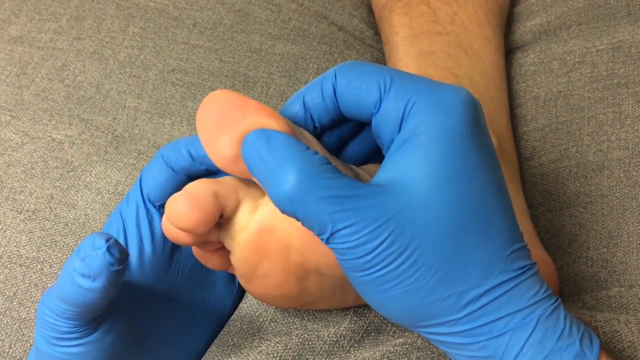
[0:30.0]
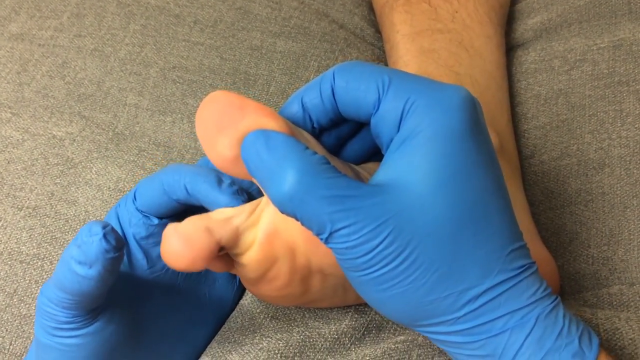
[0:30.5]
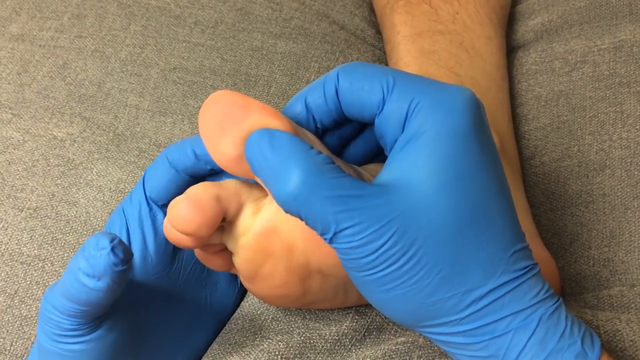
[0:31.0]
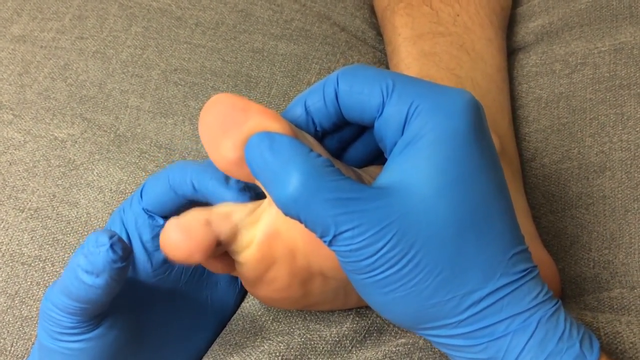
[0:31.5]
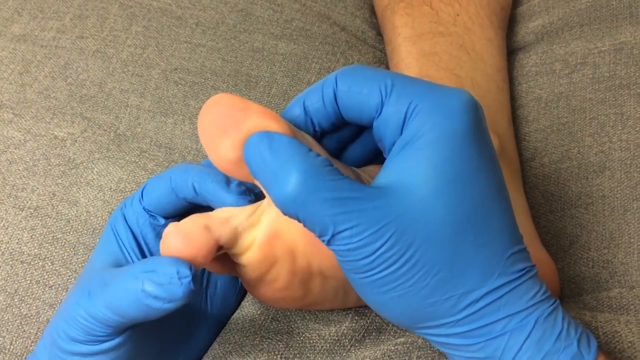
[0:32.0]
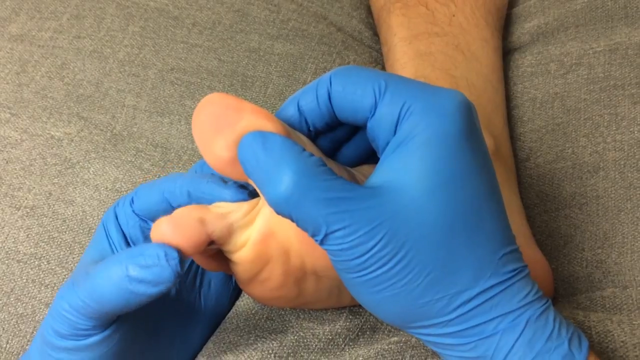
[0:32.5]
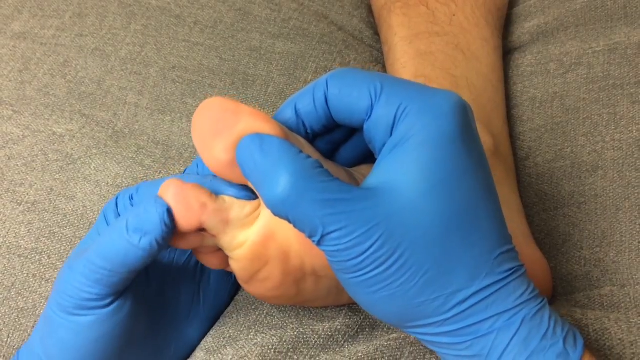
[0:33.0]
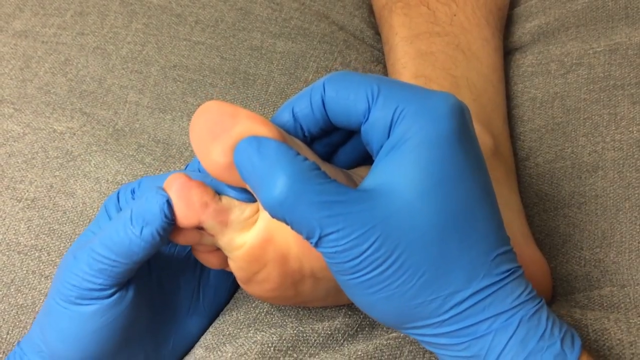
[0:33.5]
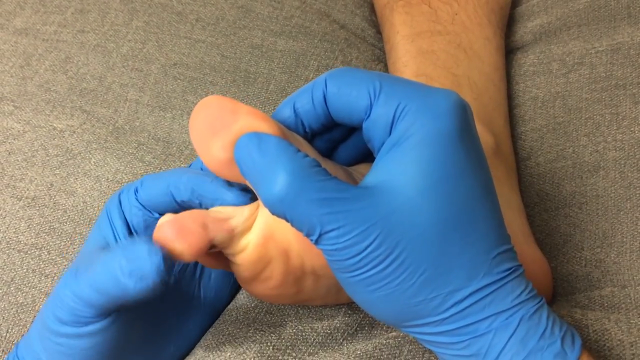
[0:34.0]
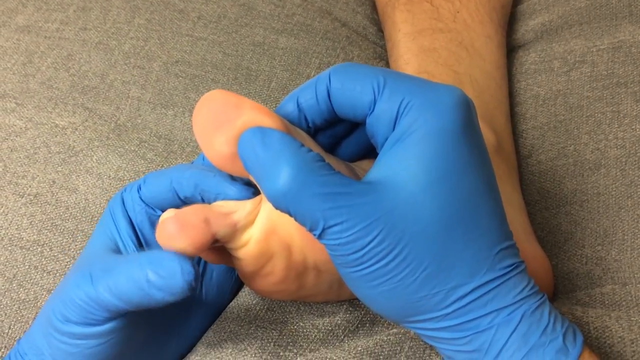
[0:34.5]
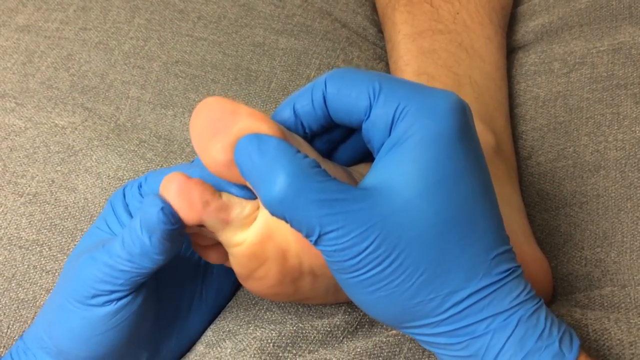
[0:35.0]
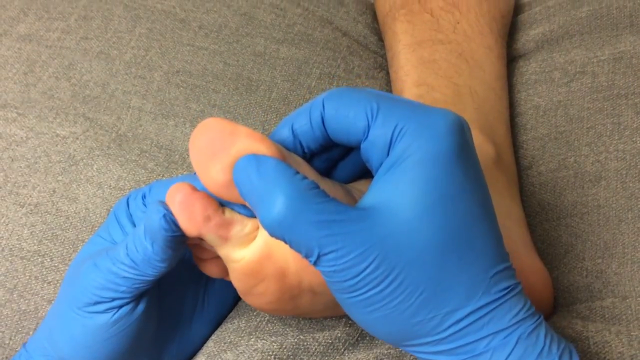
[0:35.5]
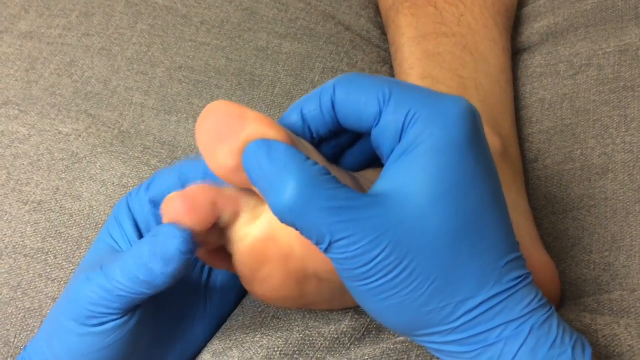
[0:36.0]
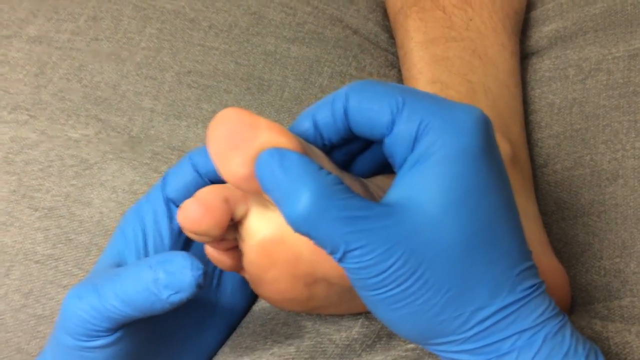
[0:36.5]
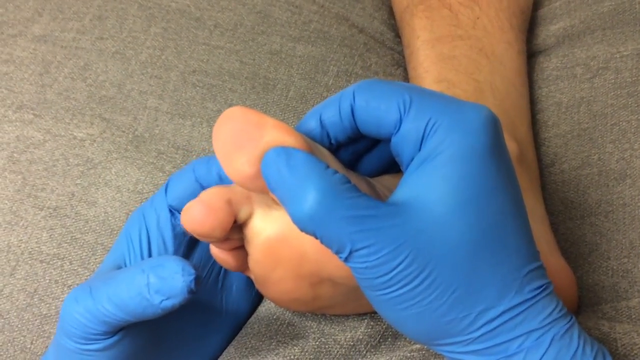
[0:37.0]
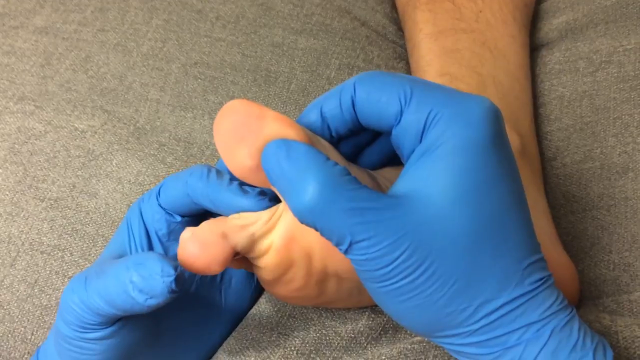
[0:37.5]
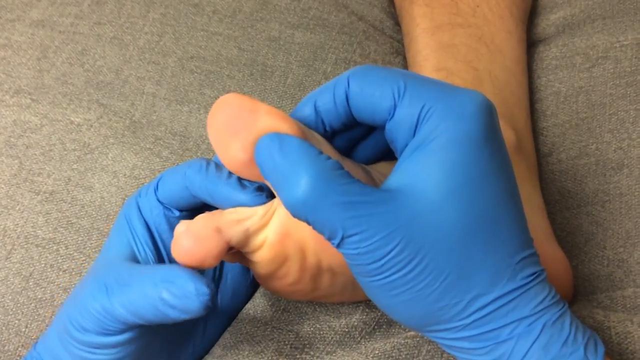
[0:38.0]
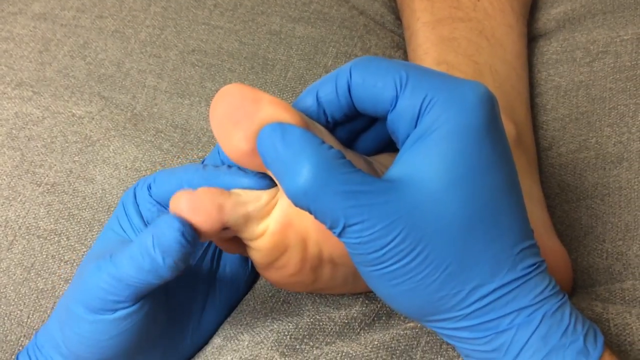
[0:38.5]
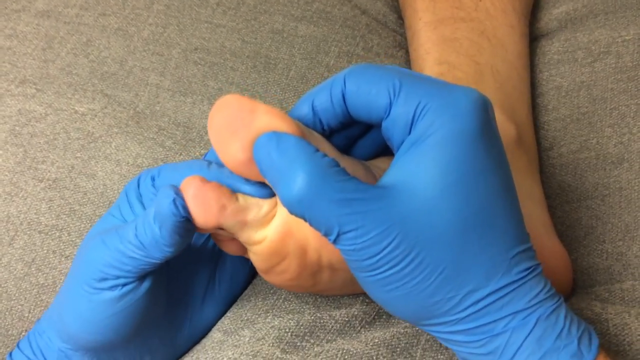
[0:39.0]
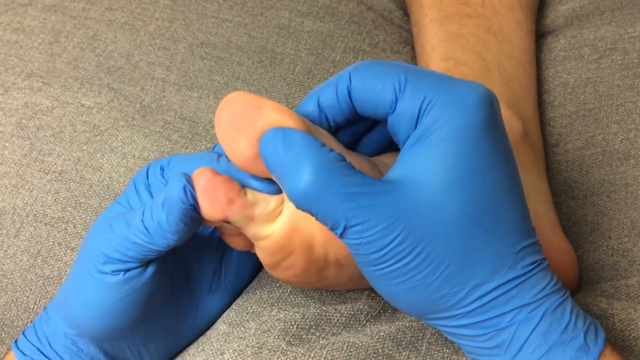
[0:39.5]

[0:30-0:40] The doctor holds the big toe with the right hand while the doctor's left pointer finger and thumb push the patient's second toe back and forth. The foot appears to be resting on a pillow or part of a couch that is grayish in color. Only the doctor's hands, in blue vinyl gloves, are visible, working the foot back and forth. The patient is visible from just below the calf, where the frame cuts off, and then there is an underside view of the toe.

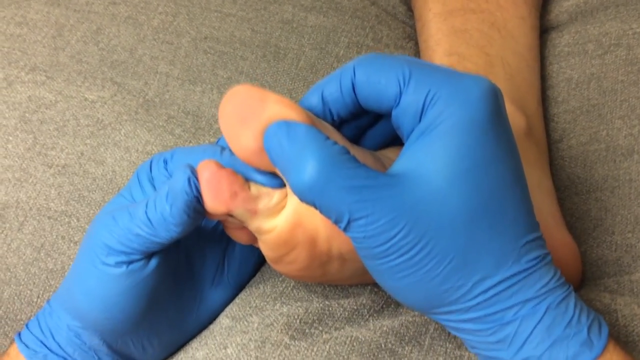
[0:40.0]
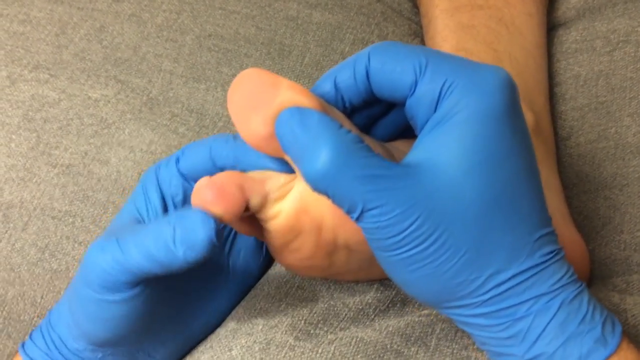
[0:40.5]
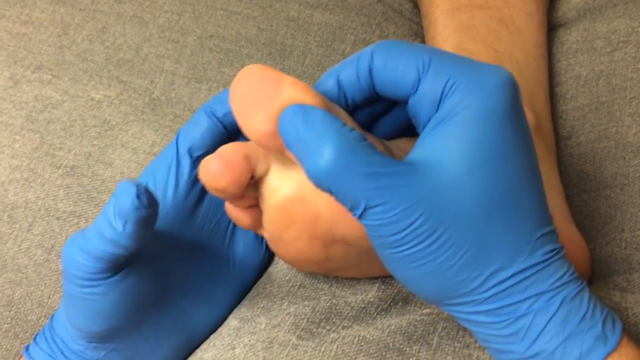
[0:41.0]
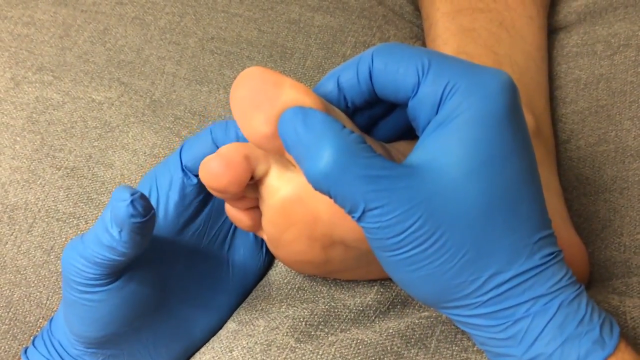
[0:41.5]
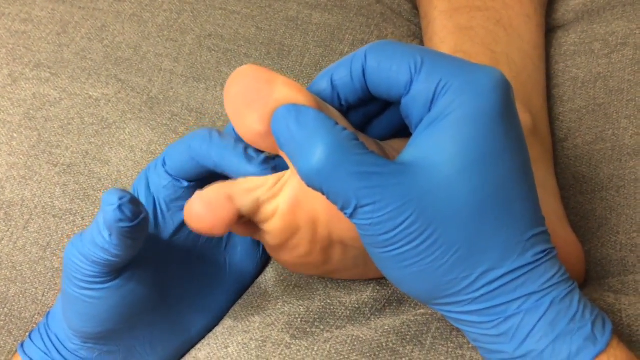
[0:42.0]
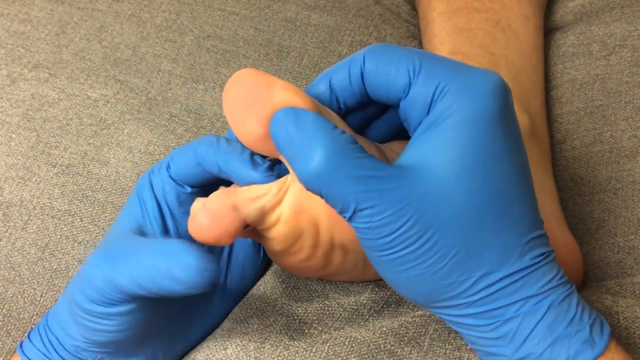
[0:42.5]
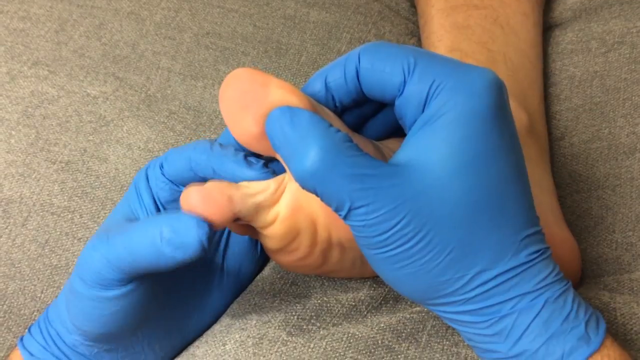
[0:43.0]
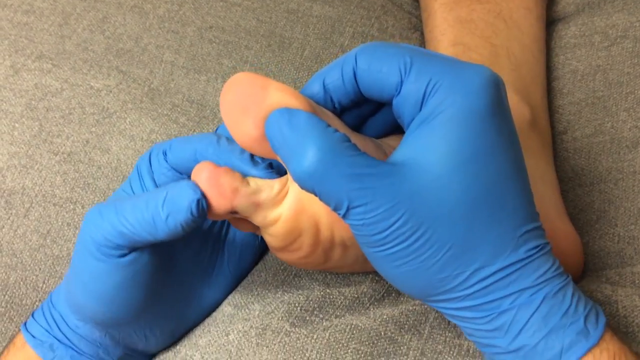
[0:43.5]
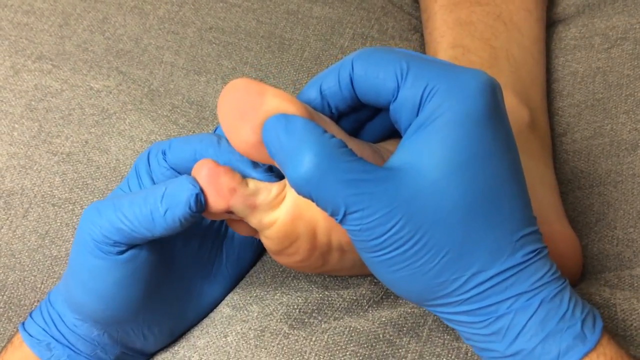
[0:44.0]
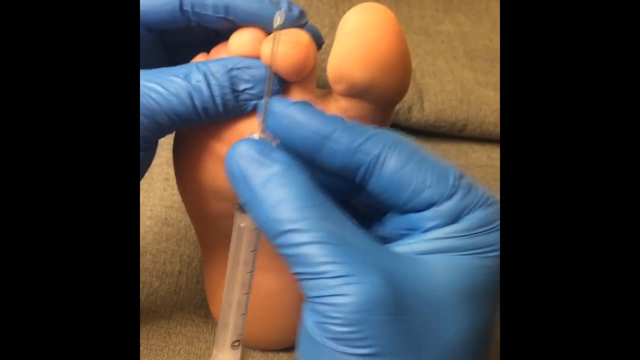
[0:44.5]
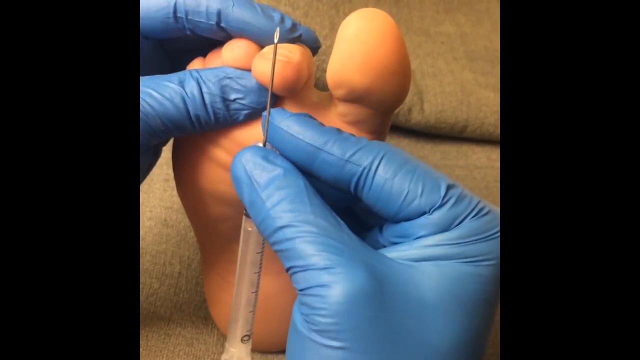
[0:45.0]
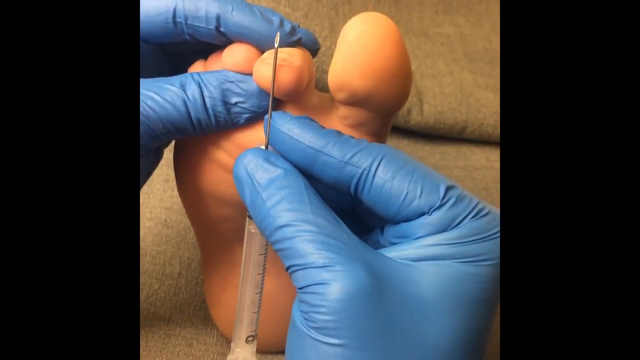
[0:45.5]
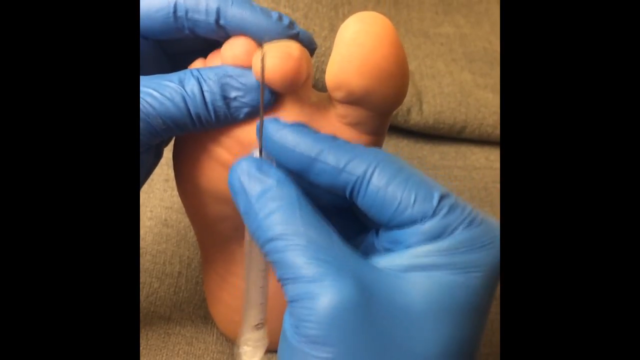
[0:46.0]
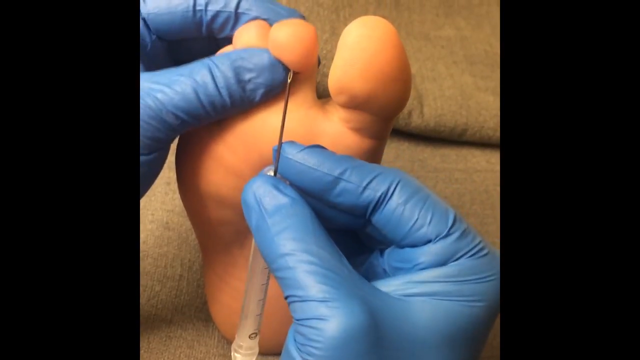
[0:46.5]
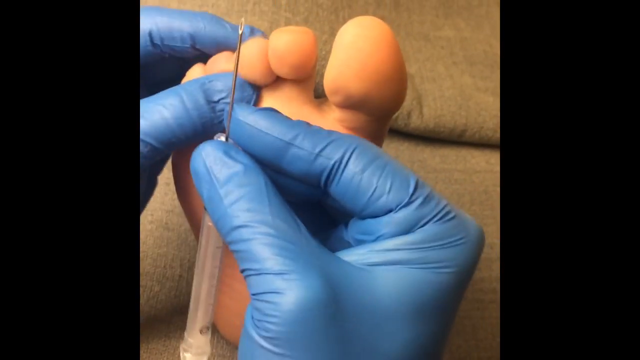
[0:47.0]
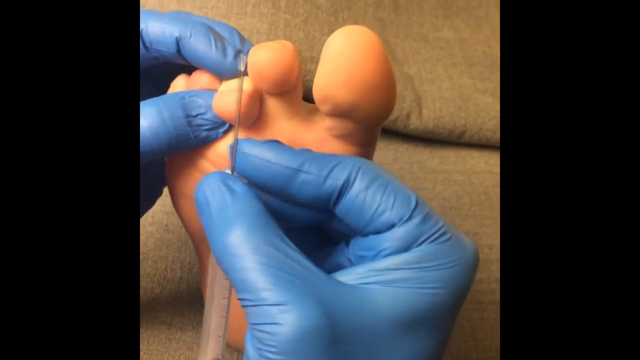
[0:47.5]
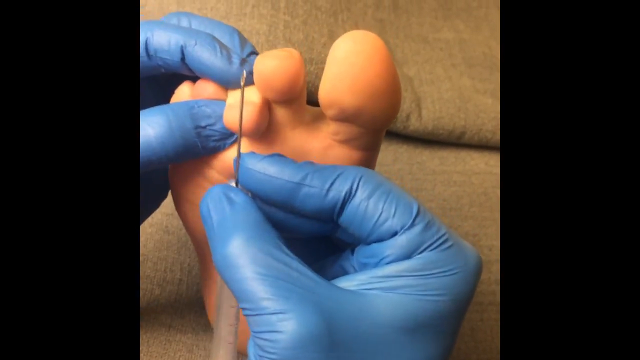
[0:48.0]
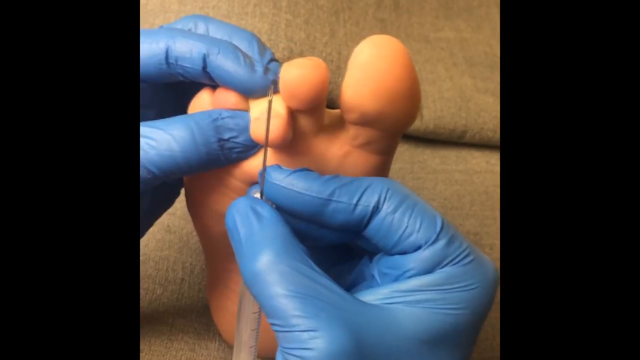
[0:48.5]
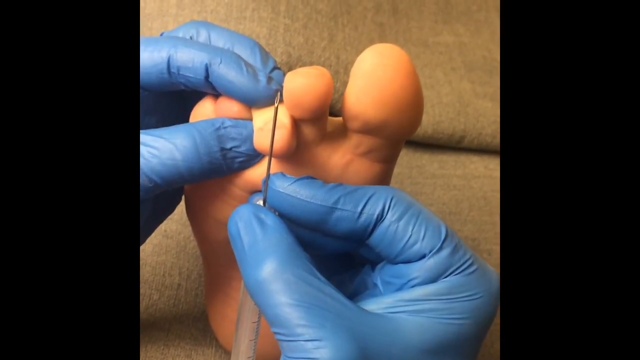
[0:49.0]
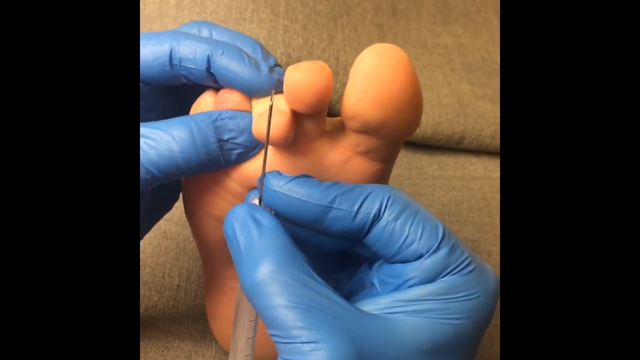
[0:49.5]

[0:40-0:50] The doctor pushes and pulls on the second toe with the thumb and pointer finger. The video then transitions back to the doctor holding the needle in the right hand. The doctor first pushes up and down on the second toe, then moves the third toe back and forth with the left hand, and appears to continue on down to the rest of the toes. All the while, the foot stays resting on the grayish pillow as the doctor works on it.